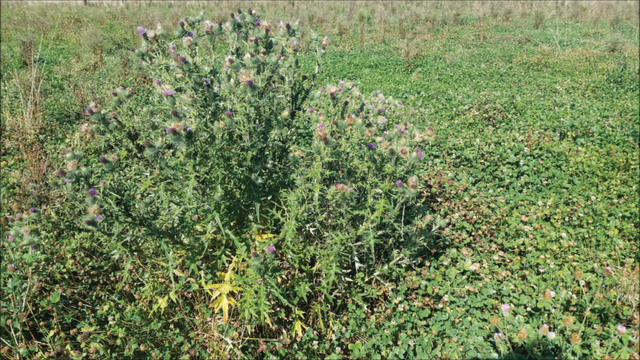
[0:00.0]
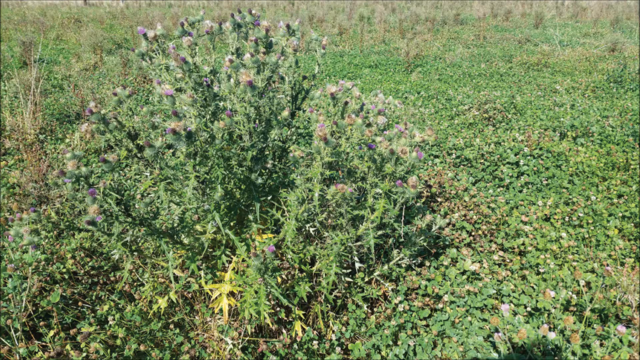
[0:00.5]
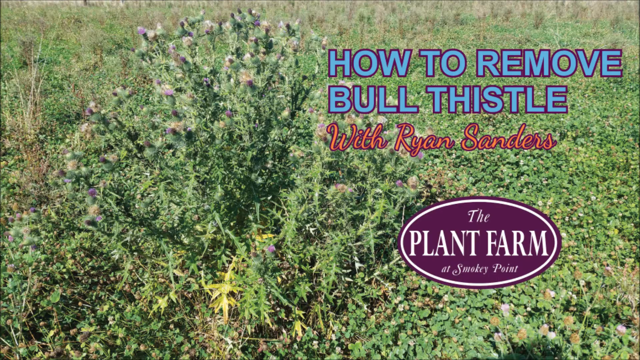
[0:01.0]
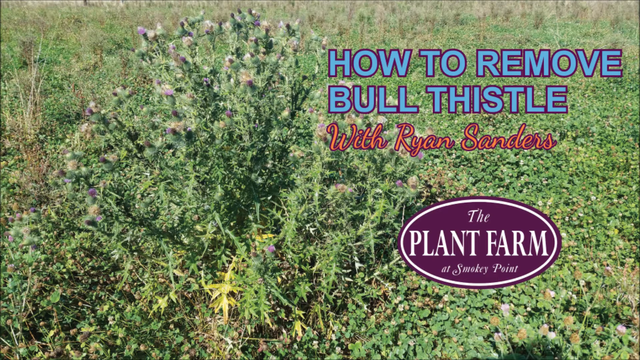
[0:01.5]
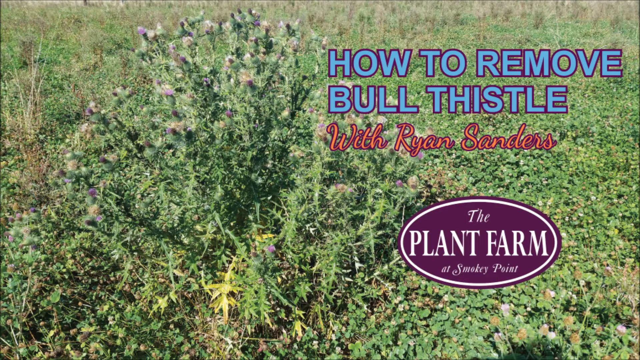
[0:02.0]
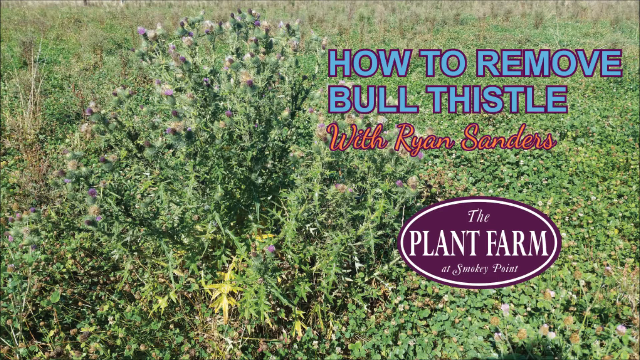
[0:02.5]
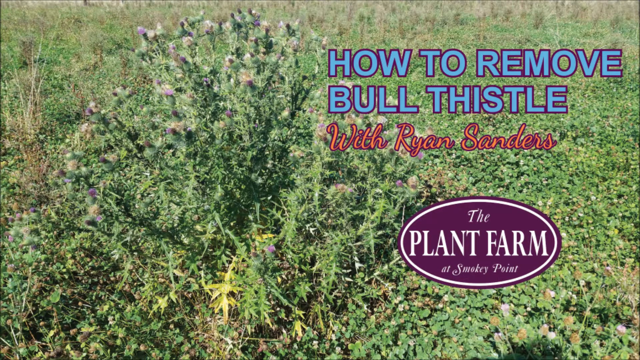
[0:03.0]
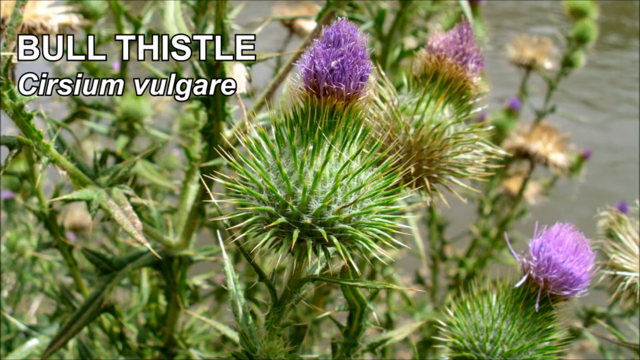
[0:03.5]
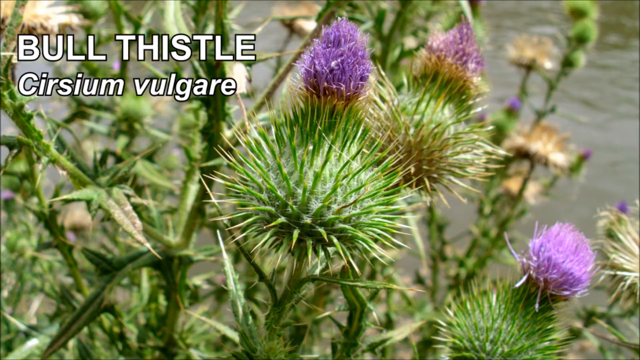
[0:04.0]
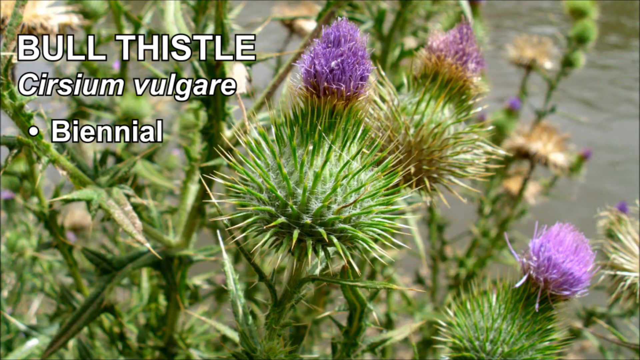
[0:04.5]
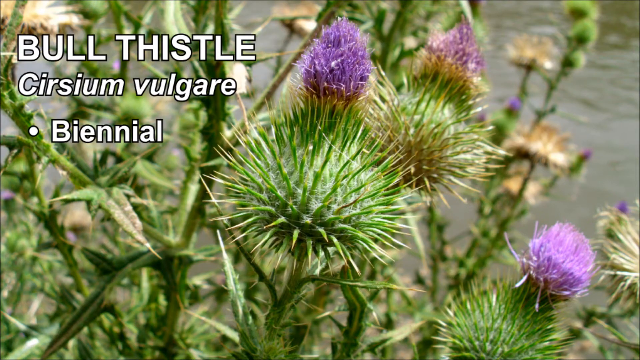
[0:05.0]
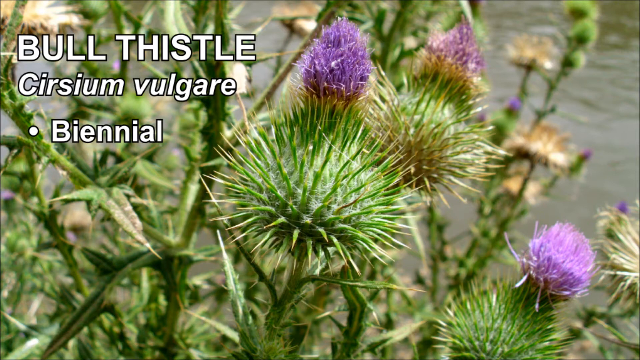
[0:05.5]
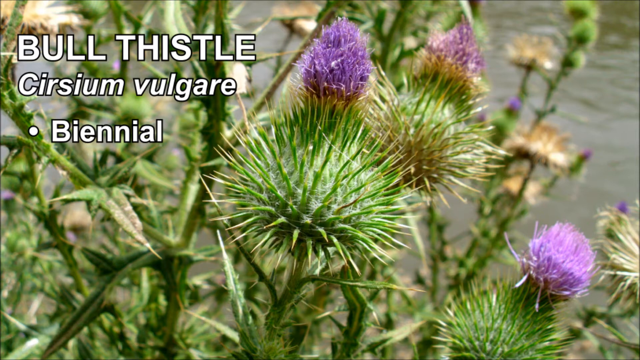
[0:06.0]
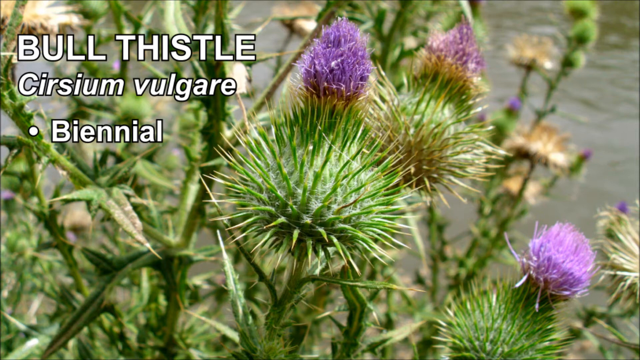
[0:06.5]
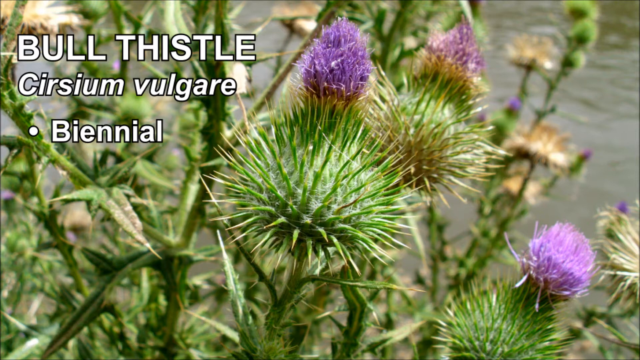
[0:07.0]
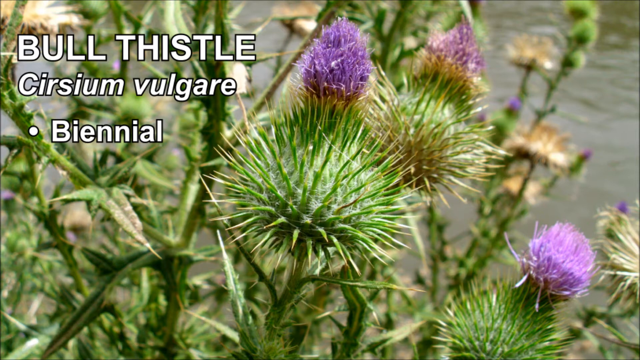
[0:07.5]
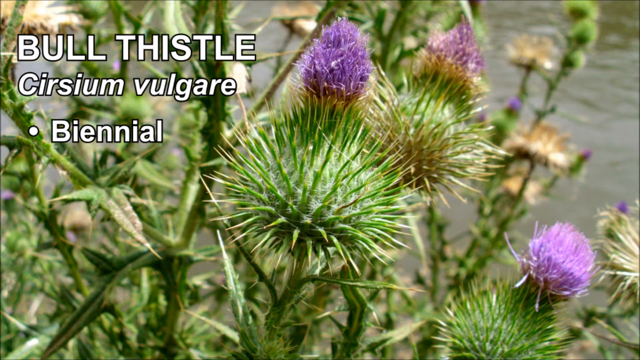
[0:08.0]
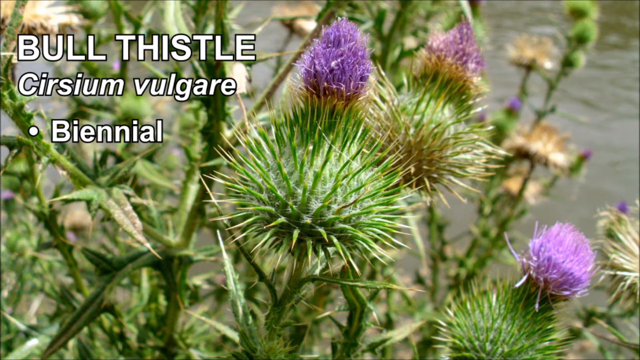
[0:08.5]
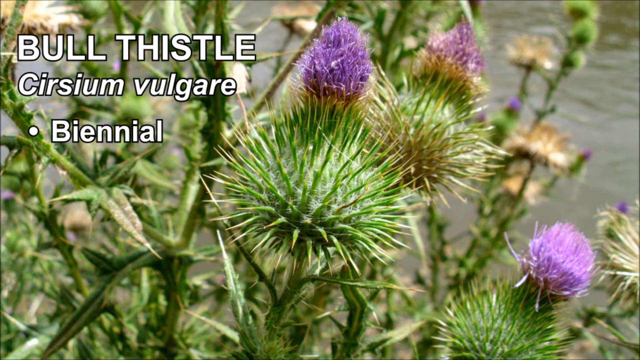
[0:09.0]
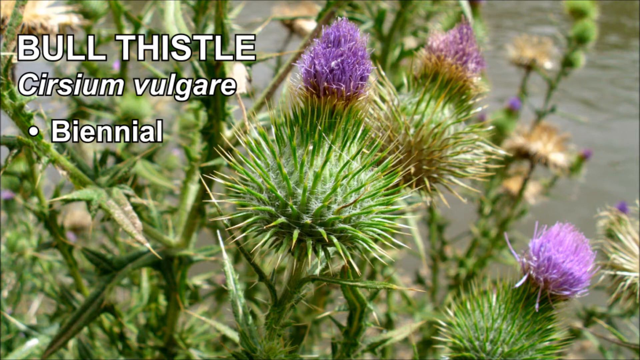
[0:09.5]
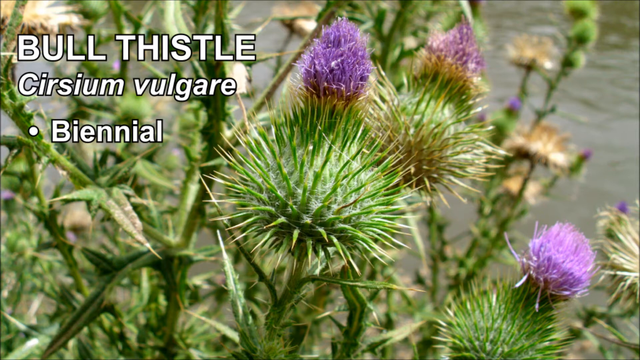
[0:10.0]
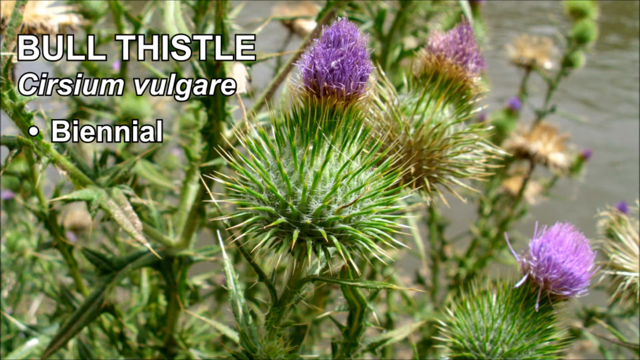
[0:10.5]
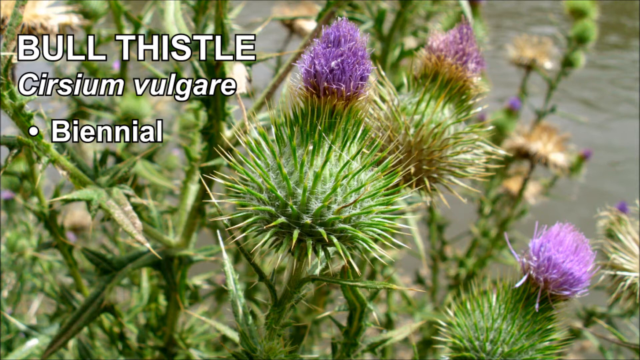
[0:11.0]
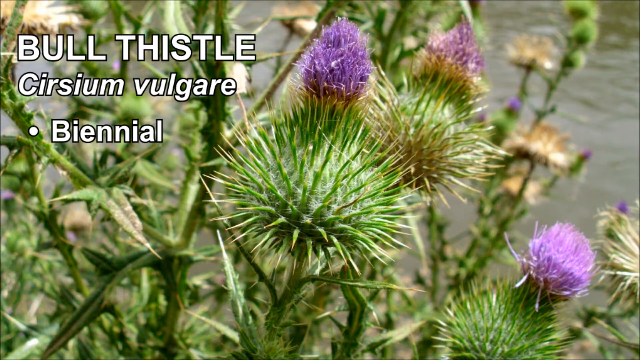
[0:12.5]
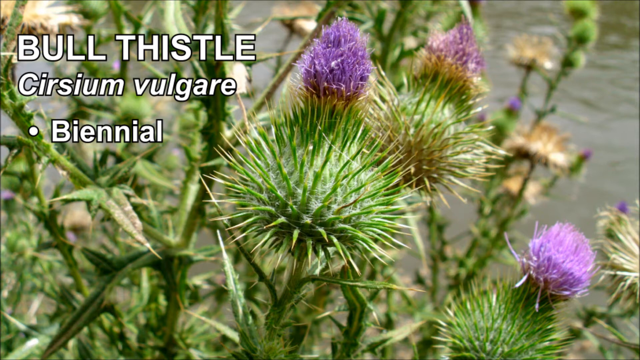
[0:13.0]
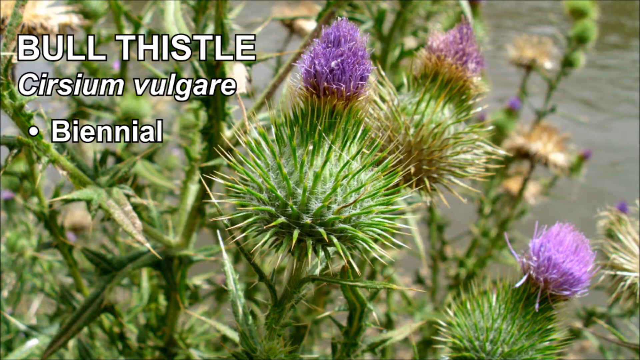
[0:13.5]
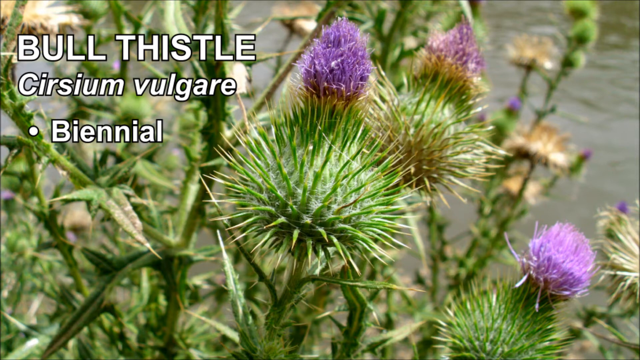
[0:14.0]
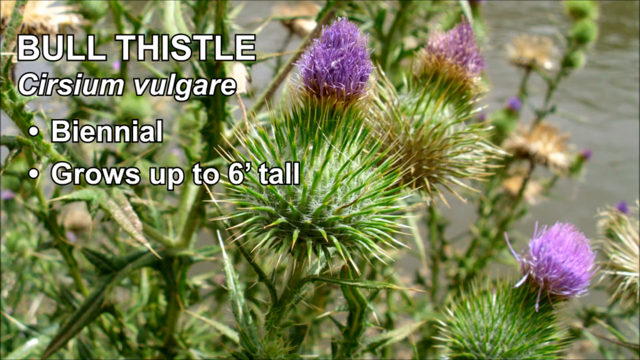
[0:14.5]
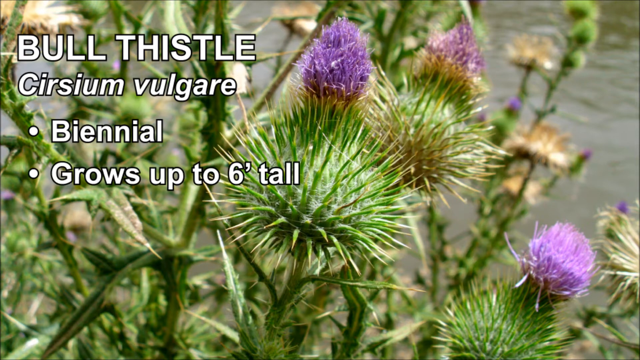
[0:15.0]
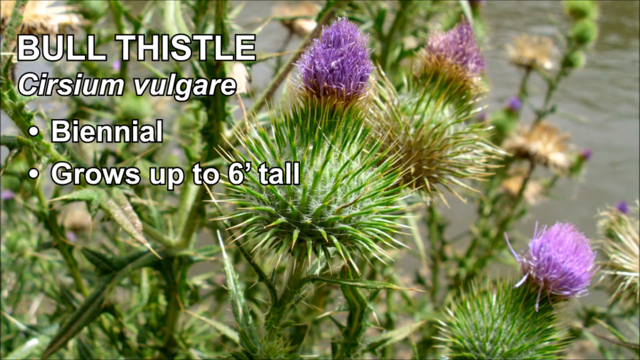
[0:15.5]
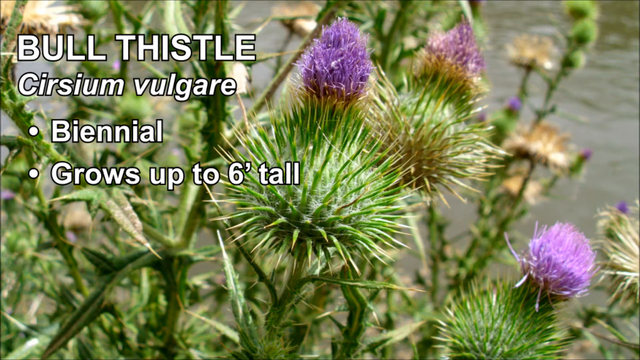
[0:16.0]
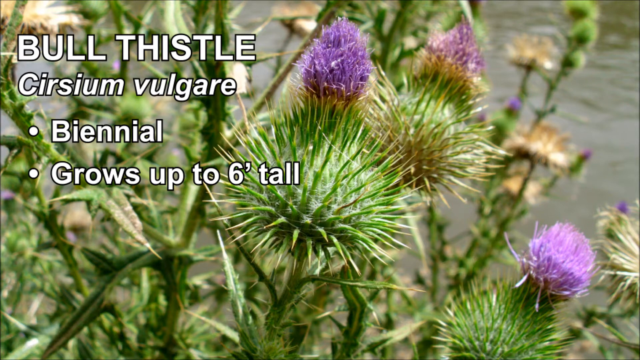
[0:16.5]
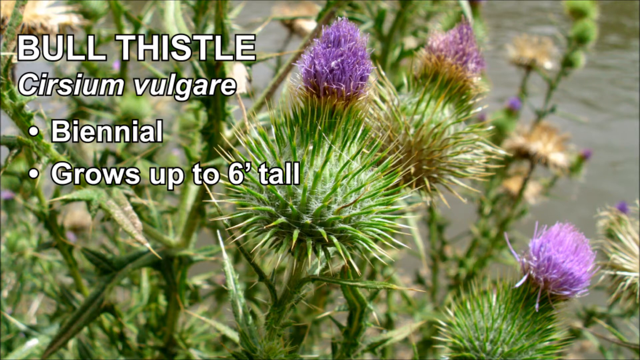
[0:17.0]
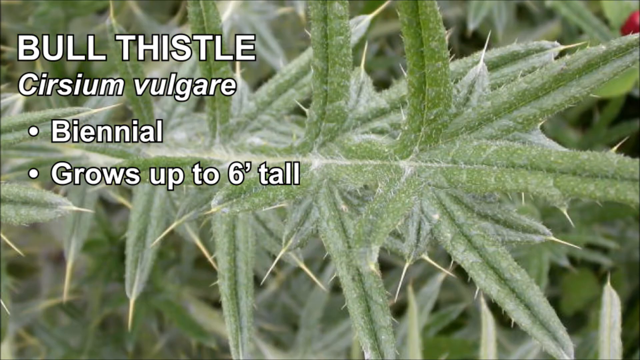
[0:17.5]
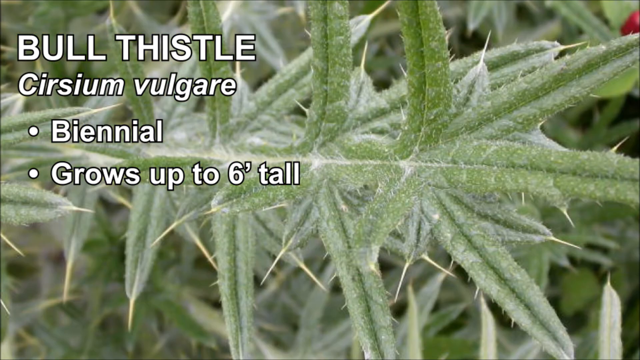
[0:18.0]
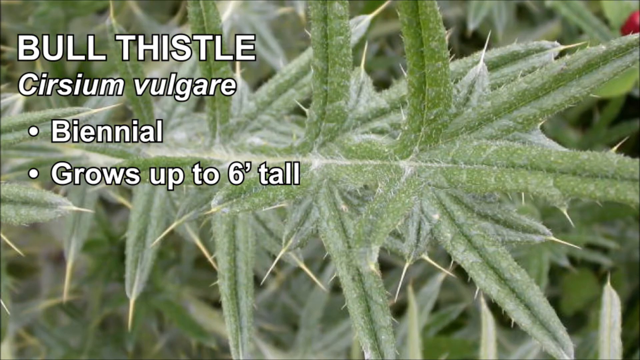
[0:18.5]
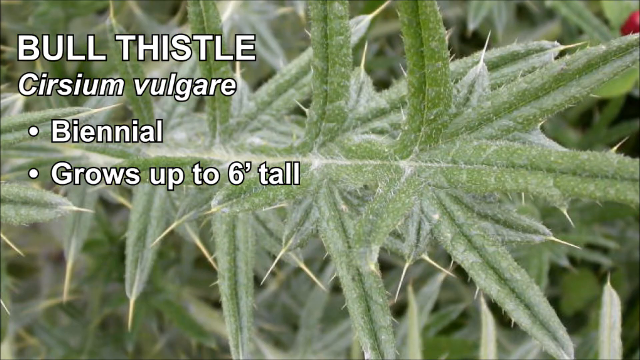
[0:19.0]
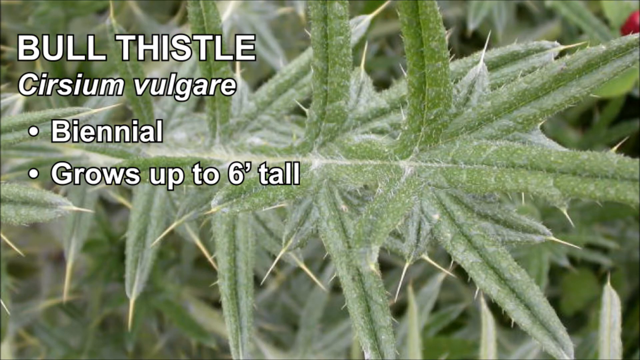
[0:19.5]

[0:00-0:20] Land covered with plants and bushes appears, including thorny plants. The video concerns removing a spiny plant that produces purple flowers, with Ryan Sanders of the plant farm at Smoky Point.